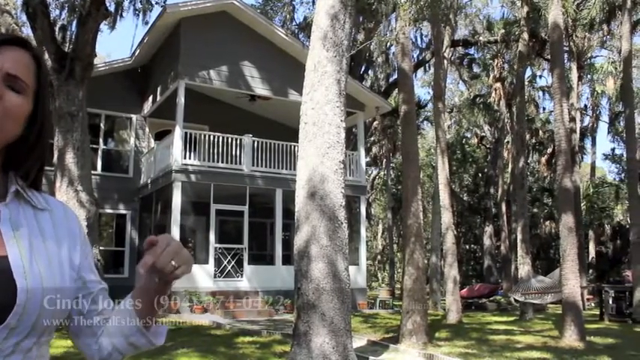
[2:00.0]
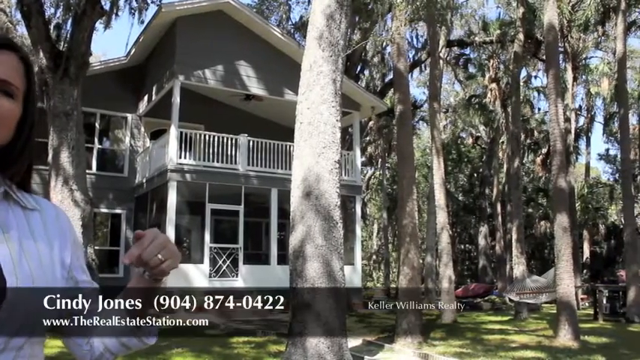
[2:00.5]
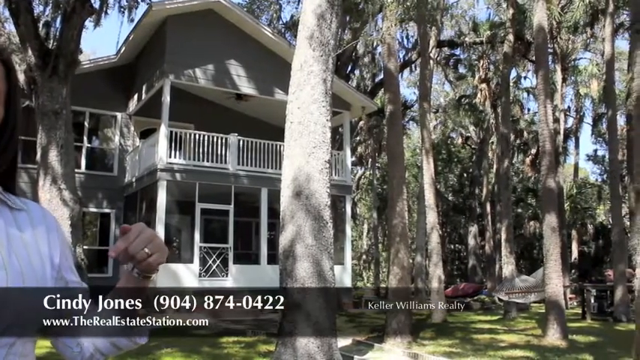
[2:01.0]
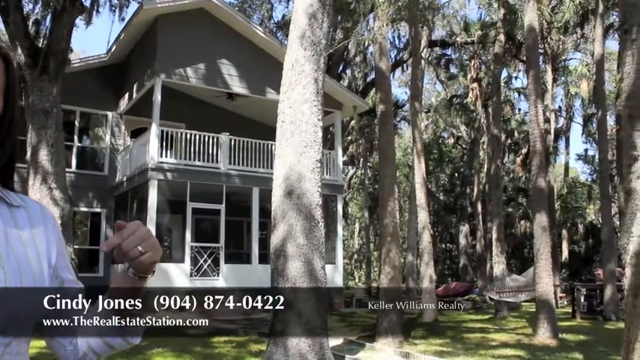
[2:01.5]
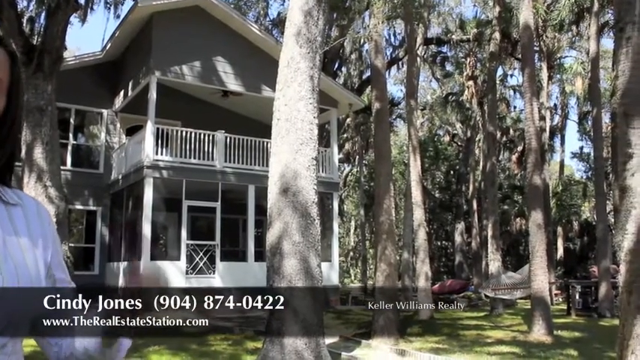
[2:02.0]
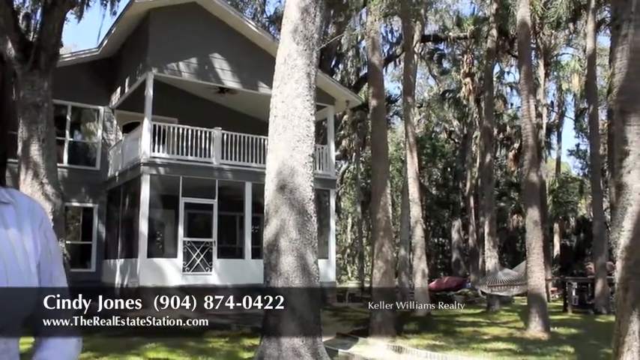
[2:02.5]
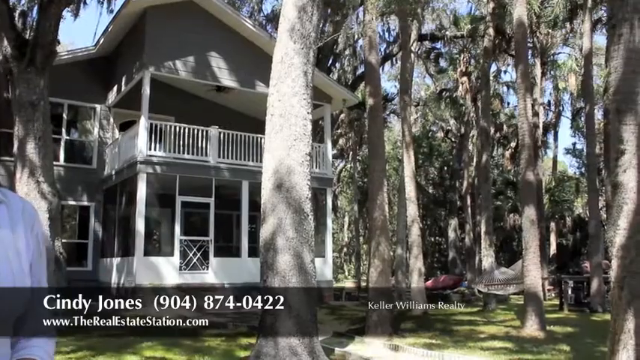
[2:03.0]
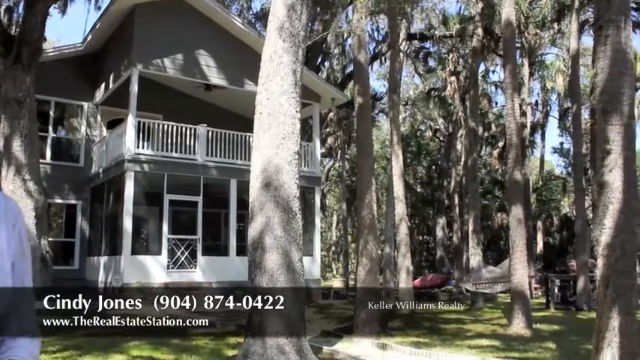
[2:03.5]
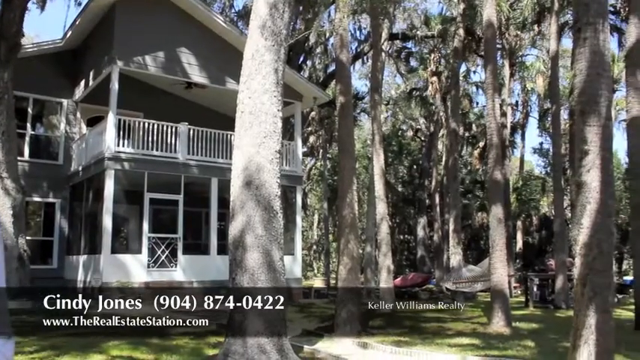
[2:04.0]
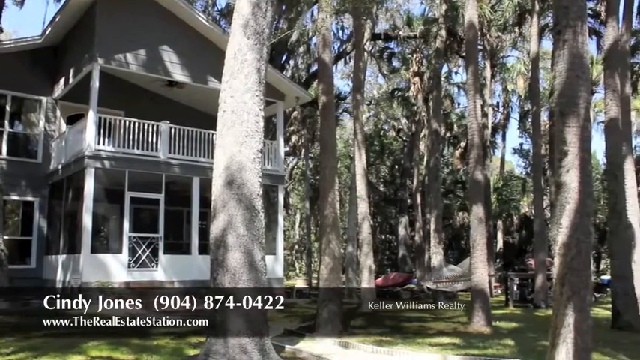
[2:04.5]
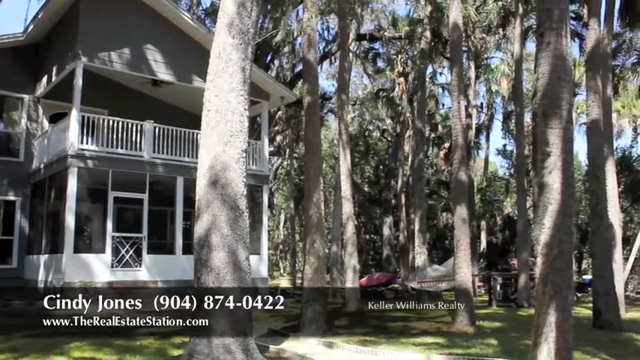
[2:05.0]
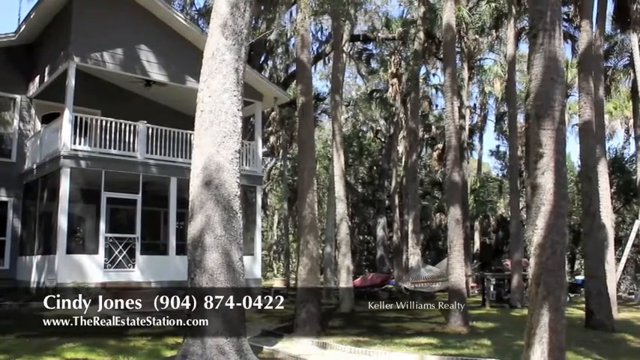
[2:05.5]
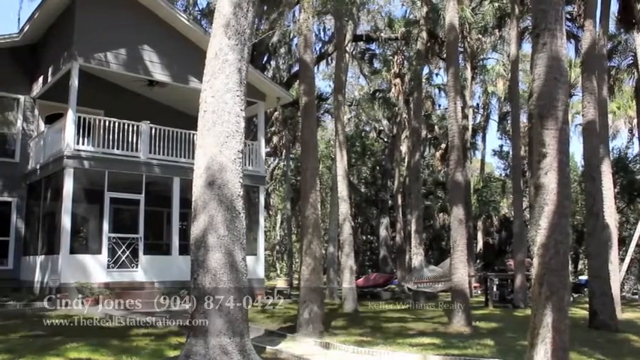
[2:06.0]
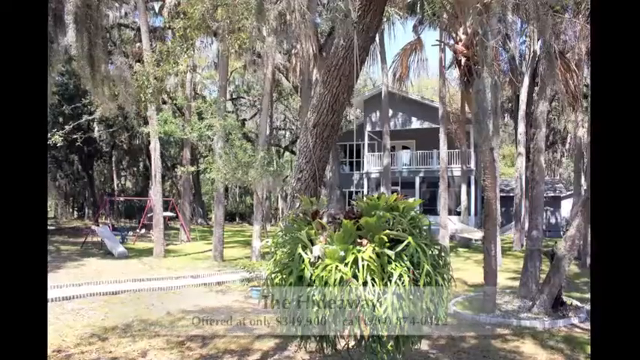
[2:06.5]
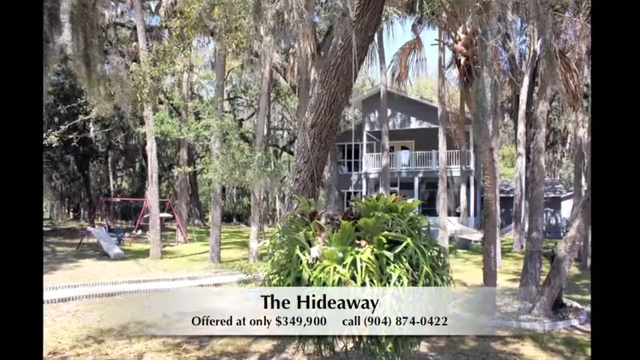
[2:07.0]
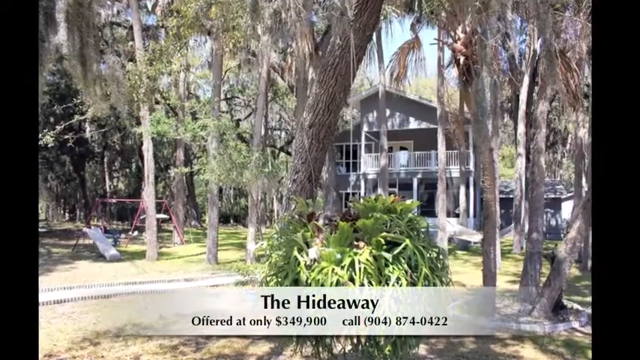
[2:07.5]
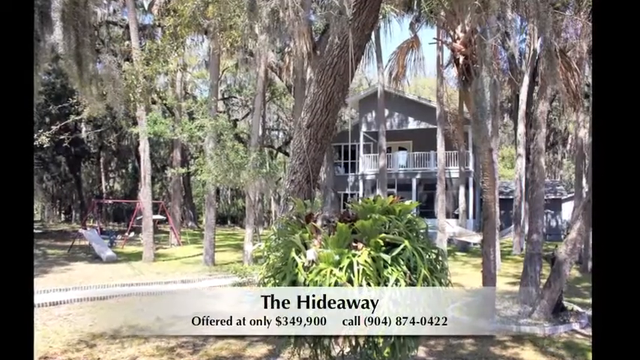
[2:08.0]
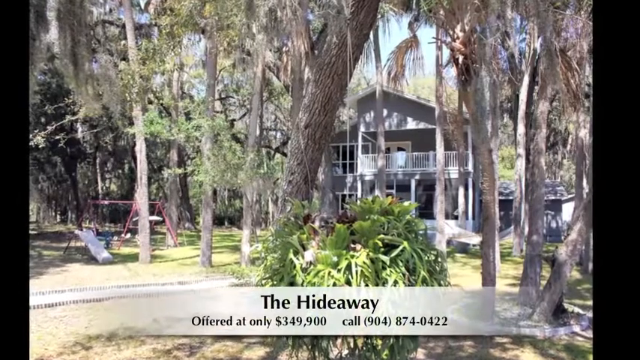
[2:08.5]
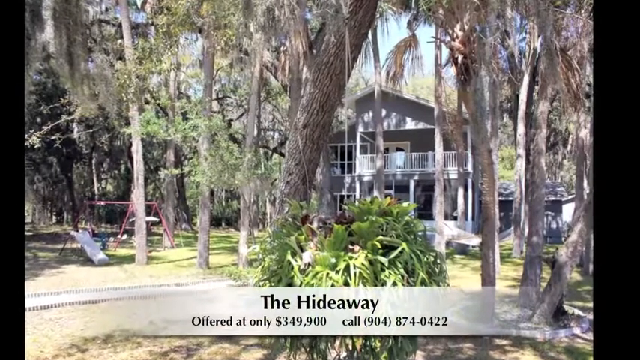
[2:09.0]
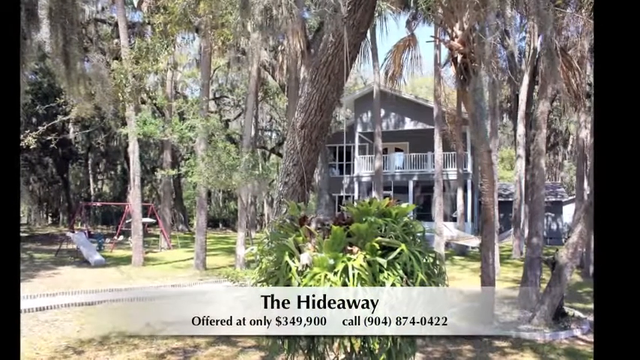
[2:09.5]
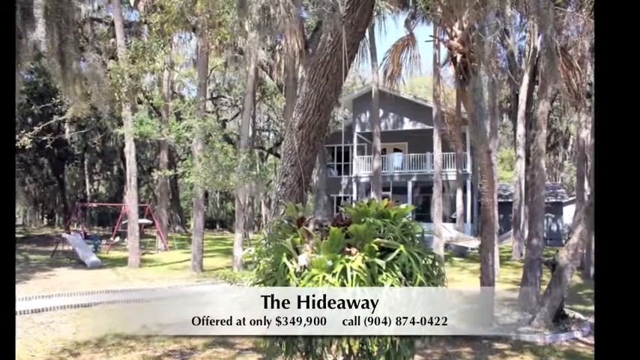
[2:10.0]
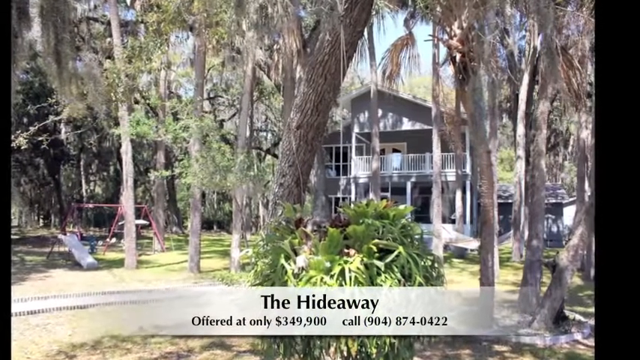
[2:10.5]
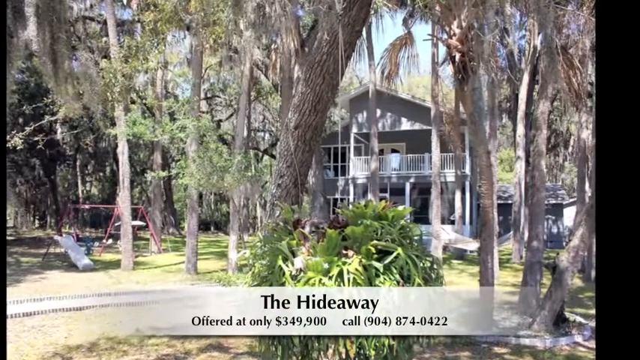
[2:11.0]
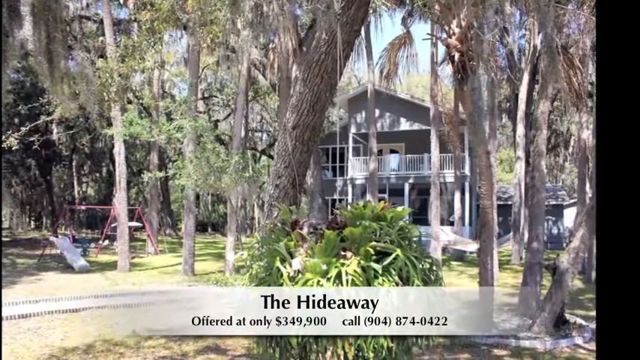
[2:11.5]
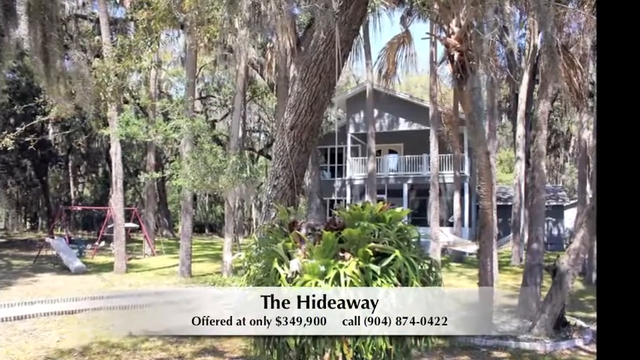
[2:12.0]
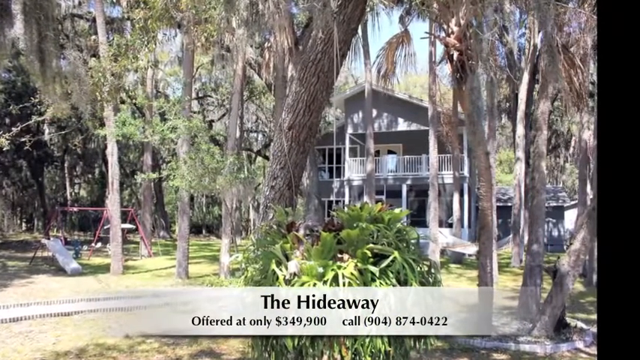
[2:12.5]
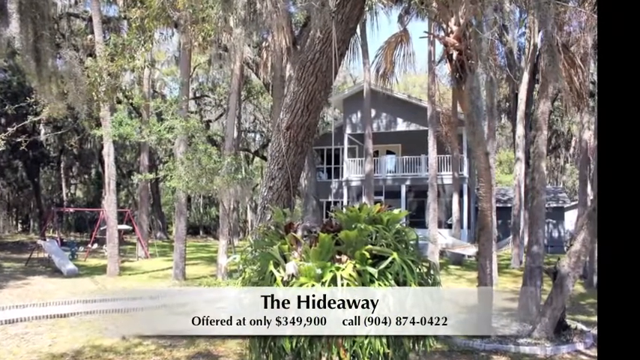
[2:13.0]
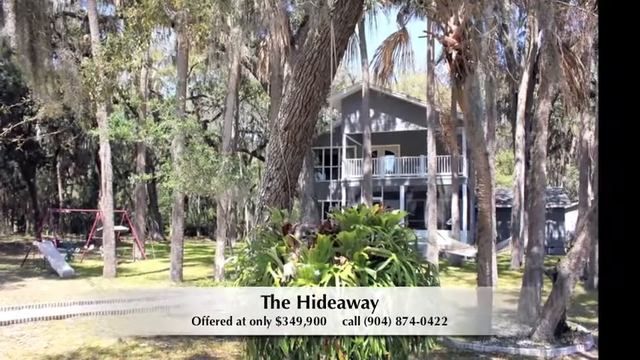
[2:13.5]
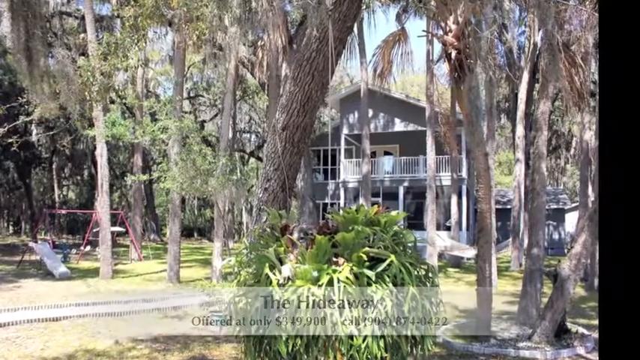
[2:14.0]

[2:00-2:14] The estate agent, Cindy Jones, appears at the bottom left of the screen, with her details in on-screen text: her name above "www.therealestatestation.com", and alongside her name a telephone number, "(904) 874-0422", and "Keller Williams Realty". From this angle a balcony is visible above, possibly adjoining one of the upstairs rooms, perhaps the bedroom or the bathroom, along with the entrance to the conservatory-type room seen from the inside earlier. There is lots of outside seating. The view then moves to a central view of the property from a short distance away, with a children's play area on the left, hard to see but possibly with swings and a slide. In front of a green shrub, a band at the bottom of the screen shows the text "the hideaway", then "offered at only $349,900", and another telephone number. The camera then closes in slowly and gently on the green shrub, as if moving through the pricing banner.